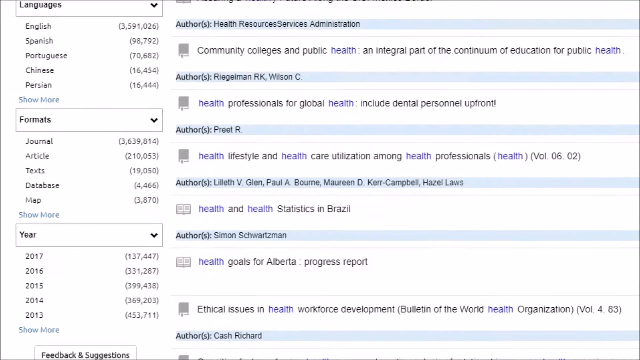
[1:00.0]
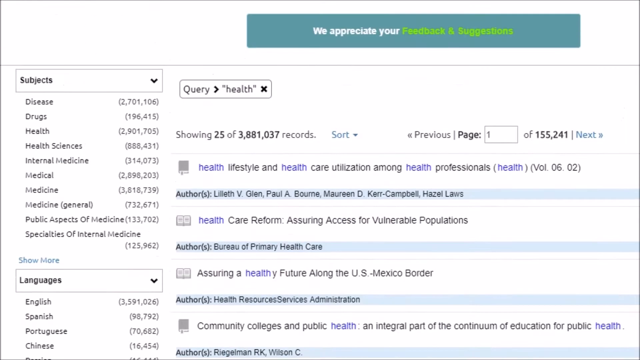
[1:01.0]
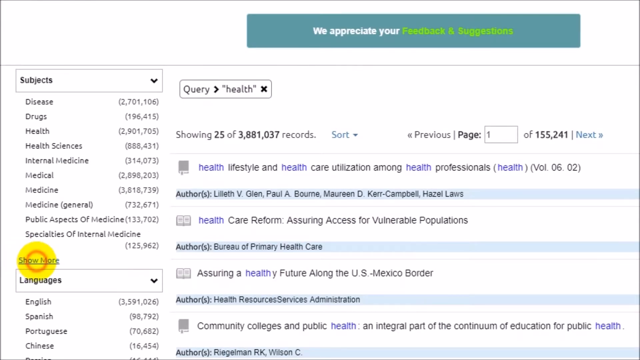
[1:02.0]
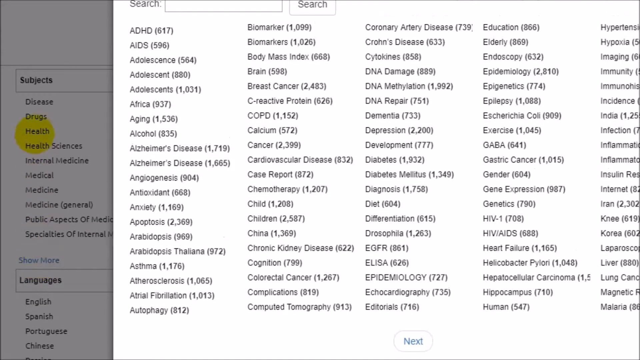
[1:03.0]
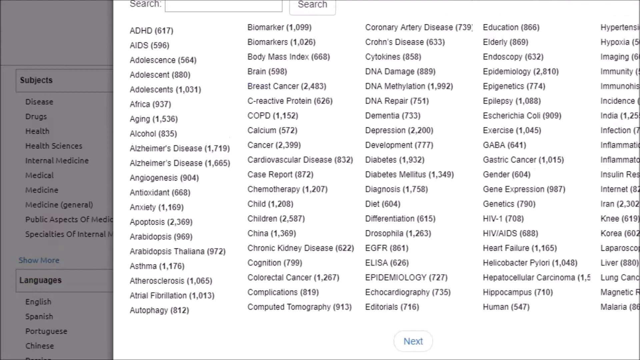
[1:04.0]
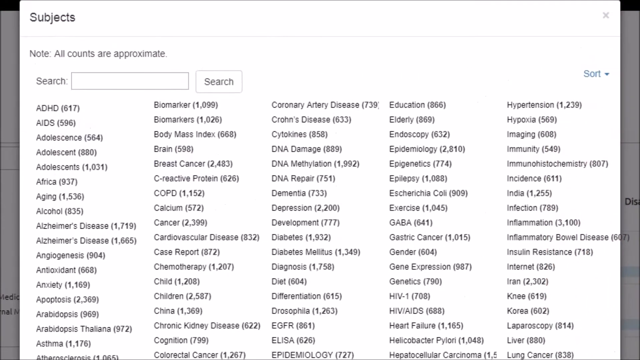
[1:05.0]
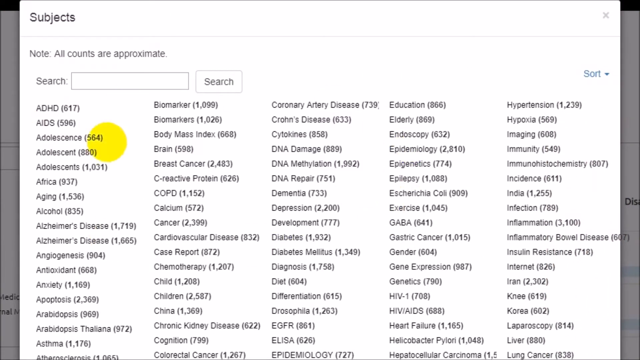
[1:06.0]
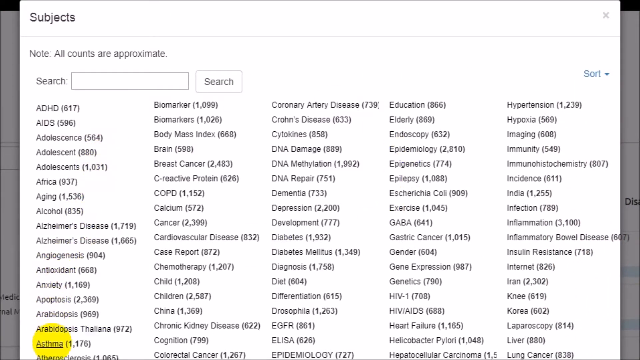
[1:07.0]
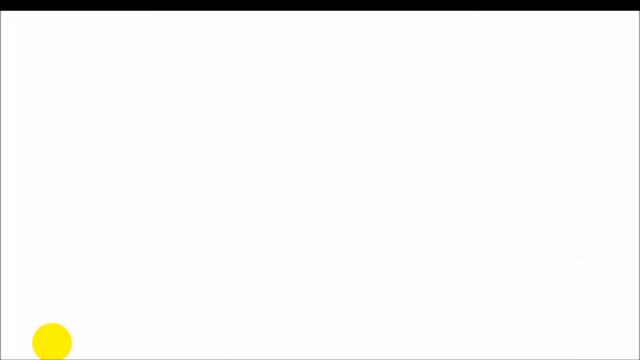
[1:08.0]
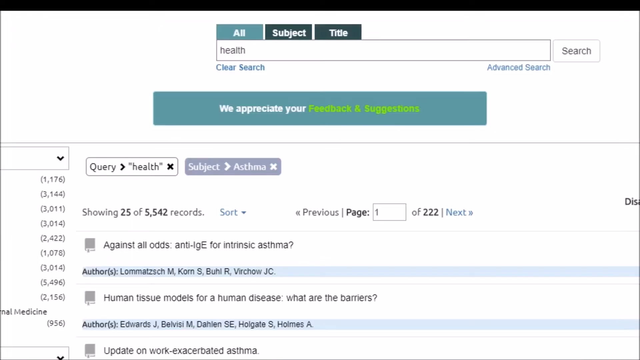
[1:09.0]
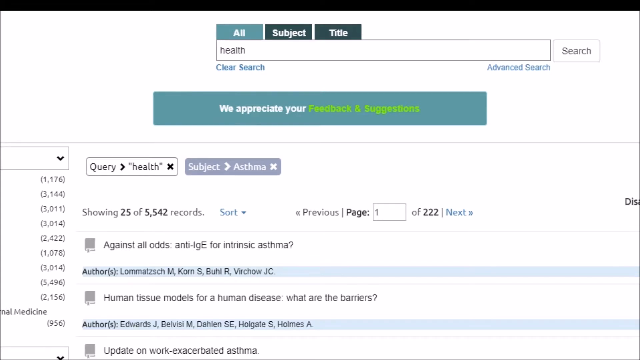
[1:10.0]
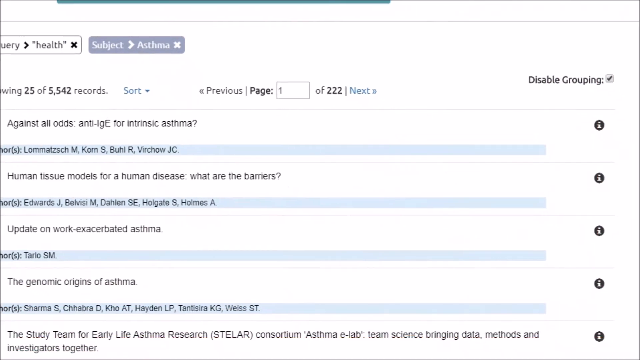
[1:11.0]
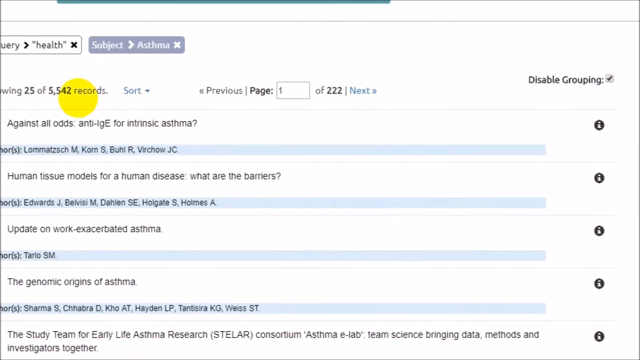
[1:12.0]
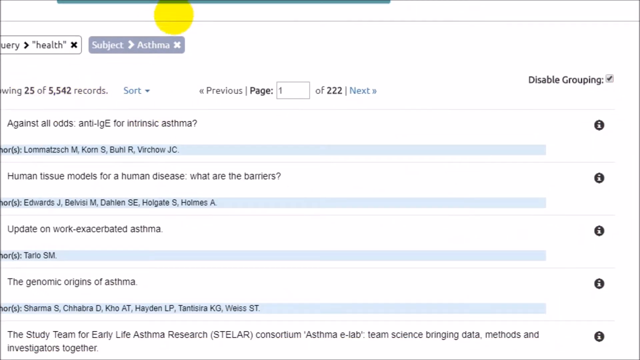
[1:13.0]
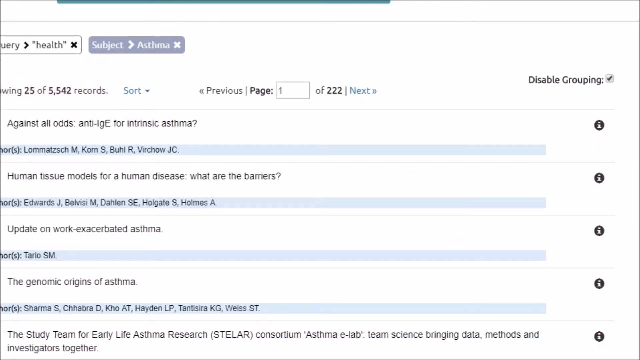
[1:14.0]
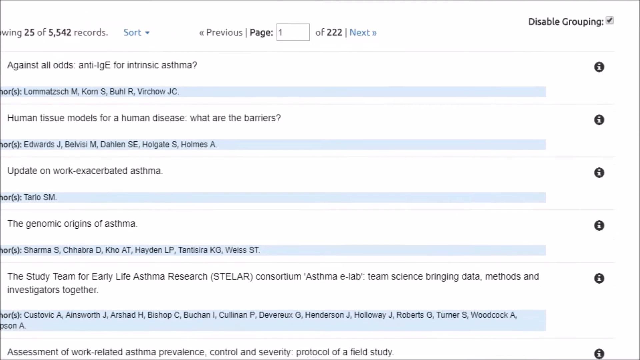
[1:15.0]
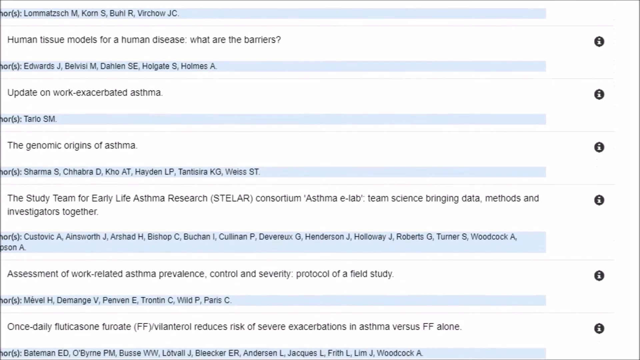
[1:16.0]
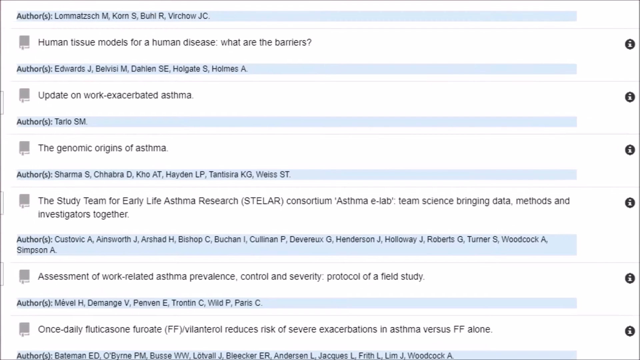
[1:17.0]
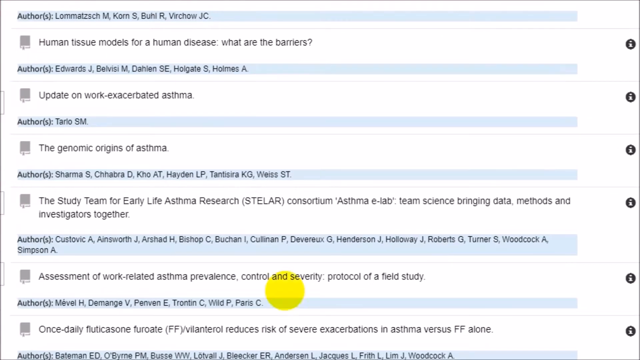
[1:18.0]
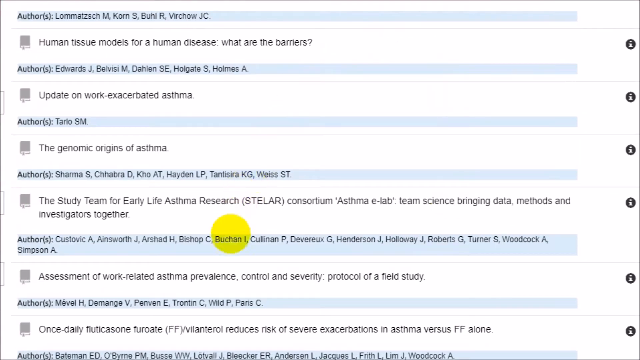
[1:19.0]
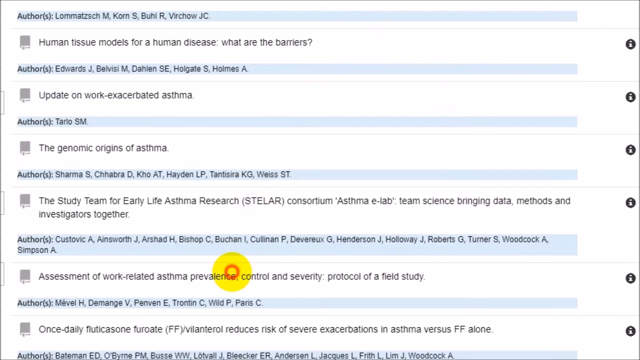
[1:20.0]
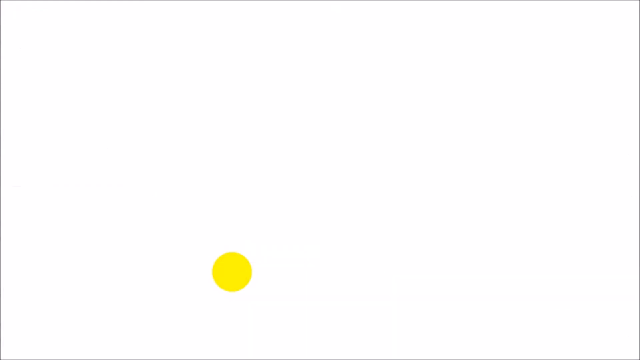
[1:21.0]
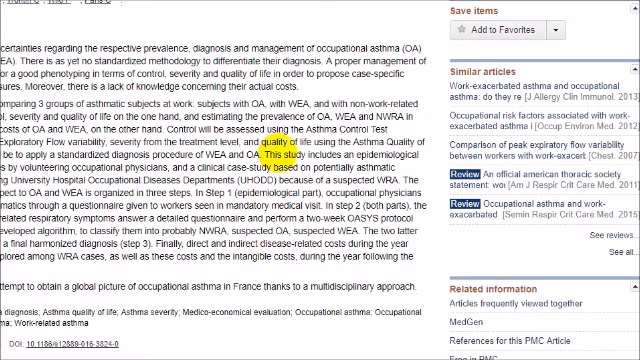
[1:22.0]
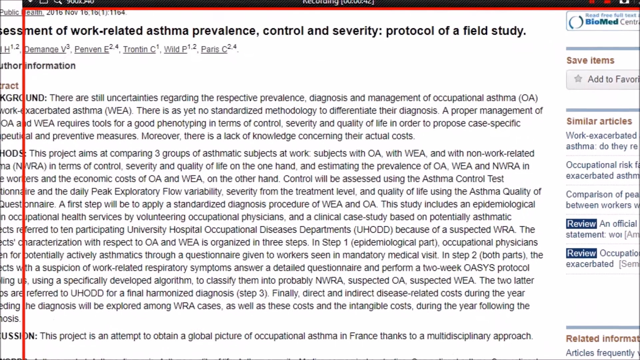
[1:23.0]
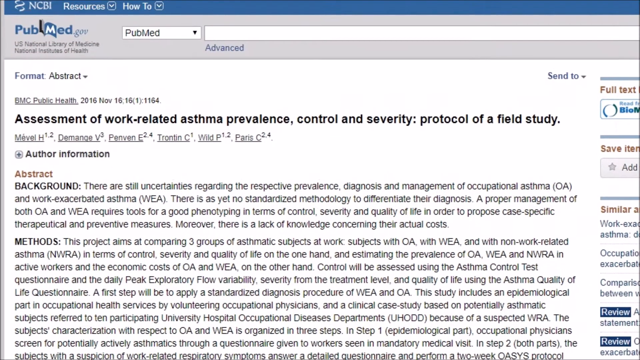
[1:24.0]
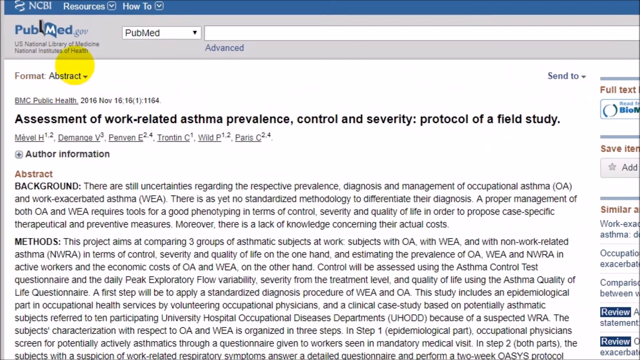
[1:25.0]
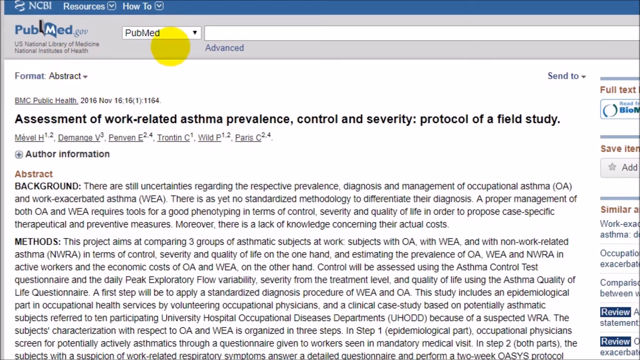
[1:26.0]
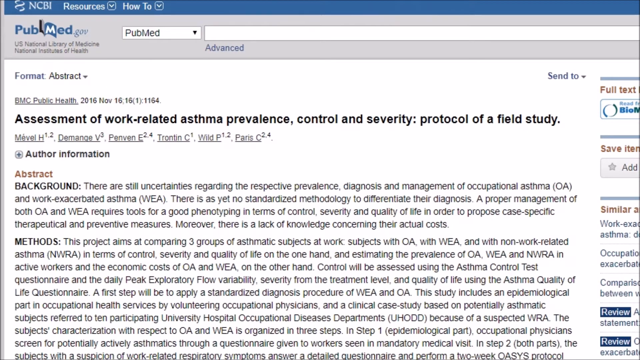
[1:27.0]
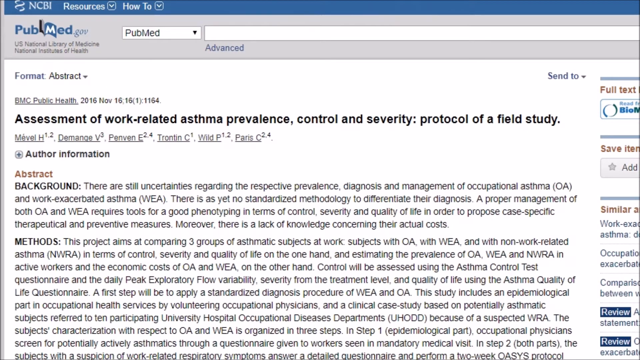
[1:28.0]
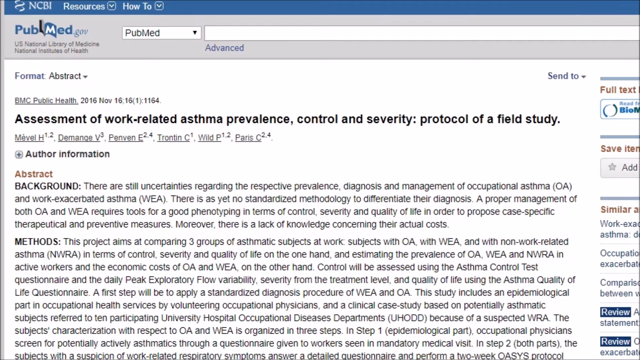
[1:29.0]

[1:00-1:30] The section for filtering search results remains on screen. The user seems to choose languages, then clicks "Show More", and a window appears with a great many sections, such as teenagers, Africa, age, alcohol, Alzheimer's and anxiety, all in alphabetical order. They seem to be commonly used keywords or topics, such as cancer, children, China, cognition, diagnosis, epidemic, education and genetics, among many others. The user clicks one of these options, and the results are filtered to a more precise selection. The user then clicks one of the articles or books, which opens another window showing the abstract of that publication along with related information such as its publisher, publish date, authors and collaborators.